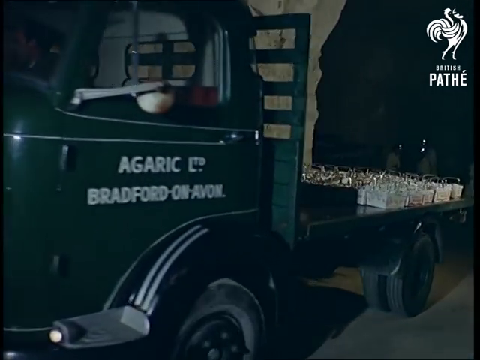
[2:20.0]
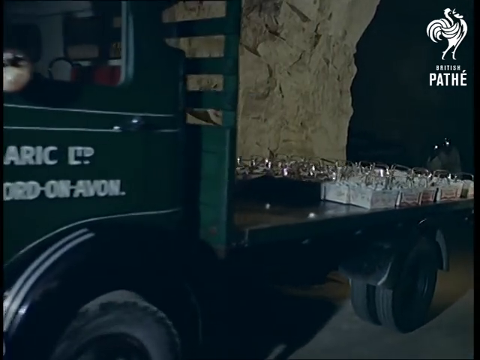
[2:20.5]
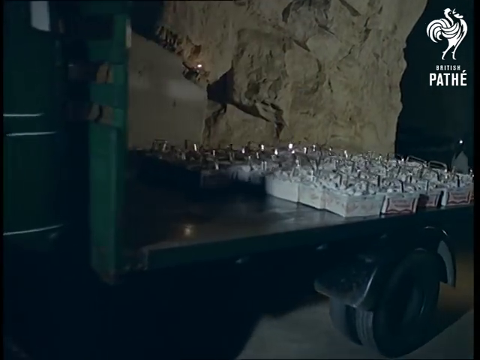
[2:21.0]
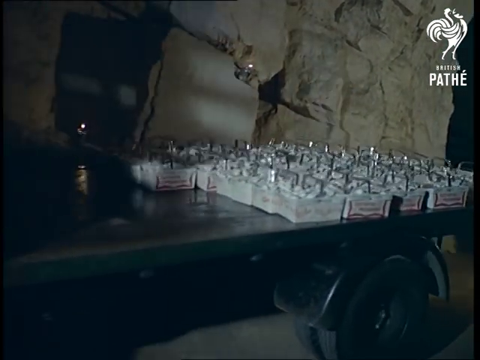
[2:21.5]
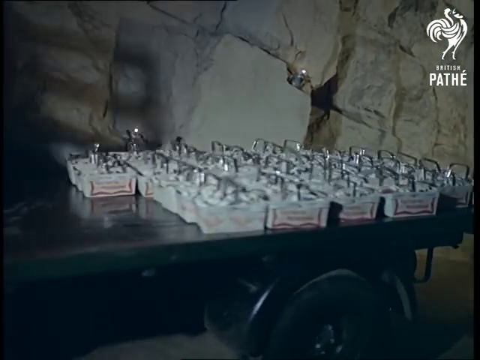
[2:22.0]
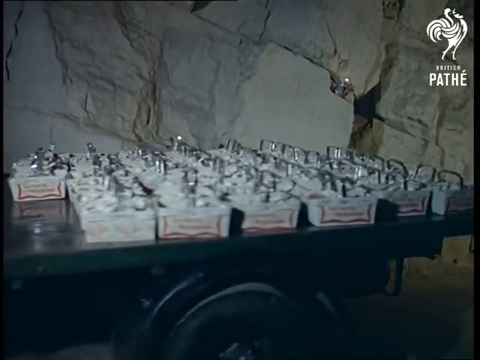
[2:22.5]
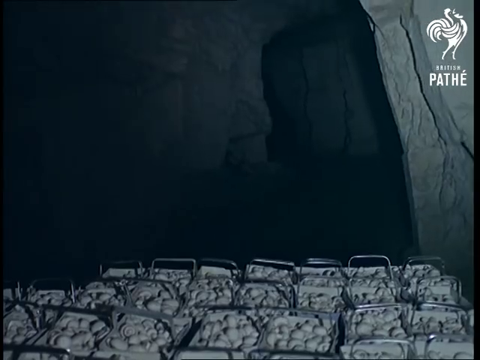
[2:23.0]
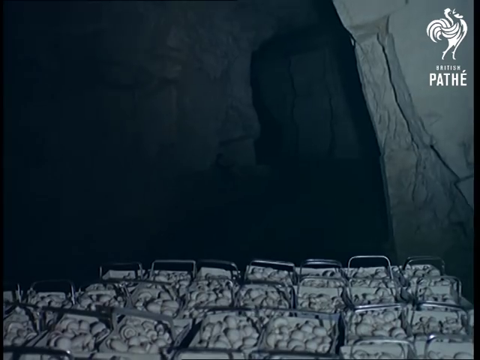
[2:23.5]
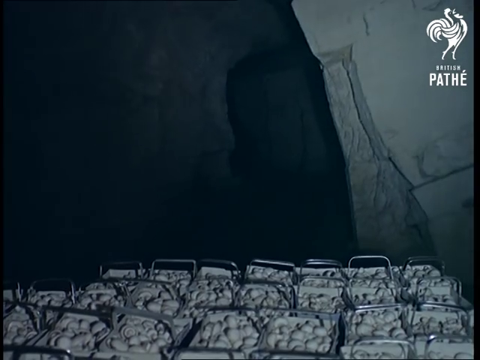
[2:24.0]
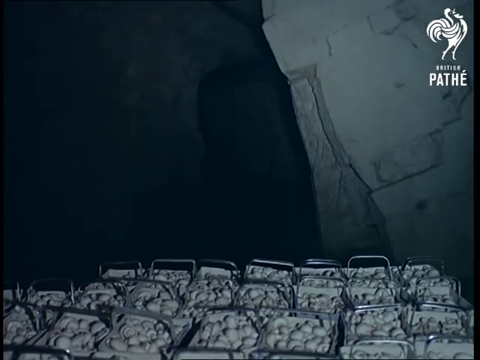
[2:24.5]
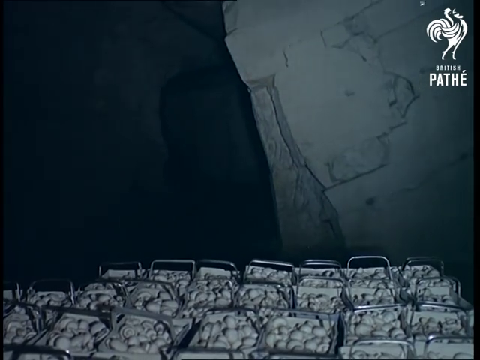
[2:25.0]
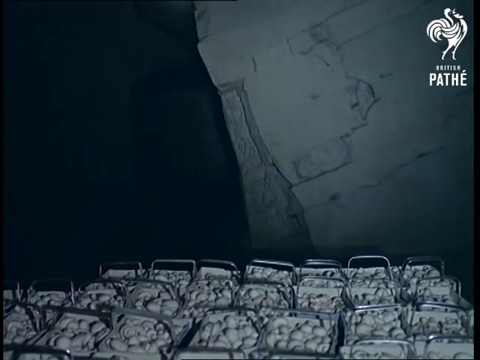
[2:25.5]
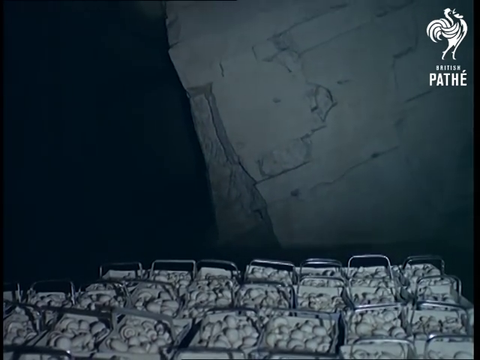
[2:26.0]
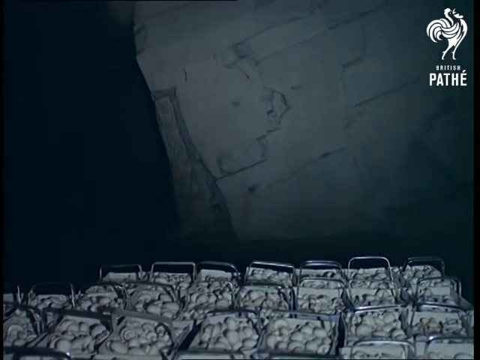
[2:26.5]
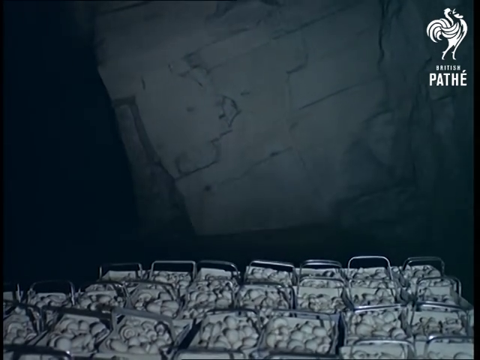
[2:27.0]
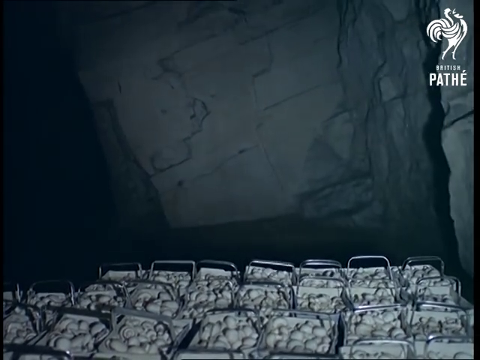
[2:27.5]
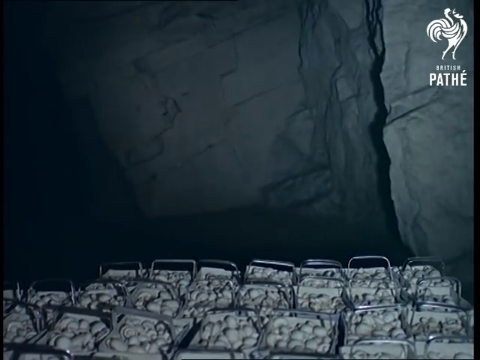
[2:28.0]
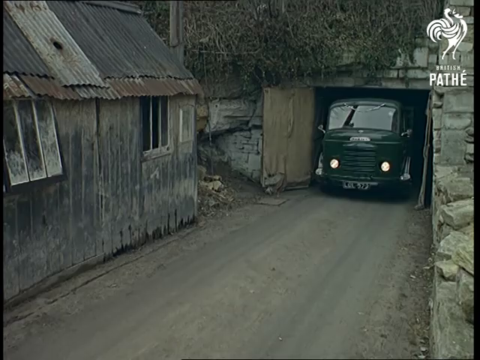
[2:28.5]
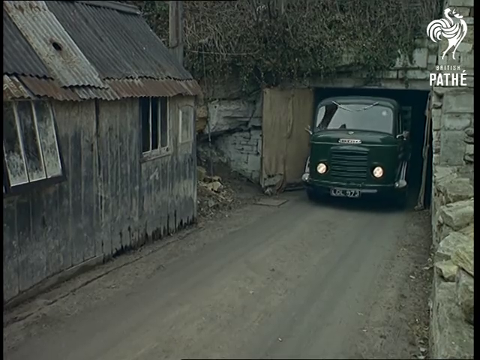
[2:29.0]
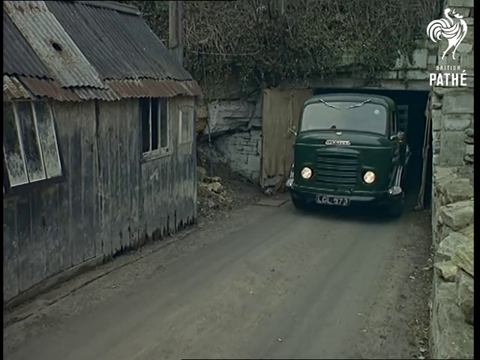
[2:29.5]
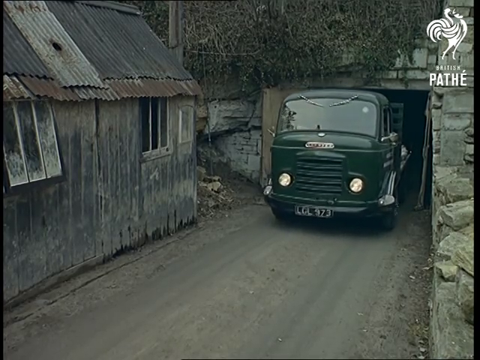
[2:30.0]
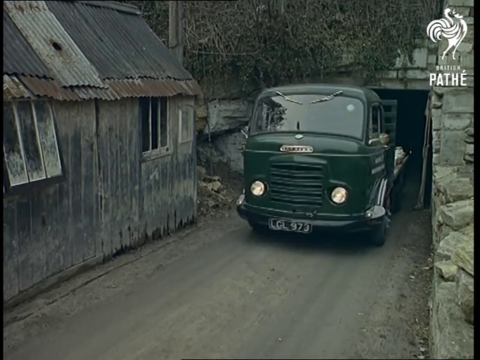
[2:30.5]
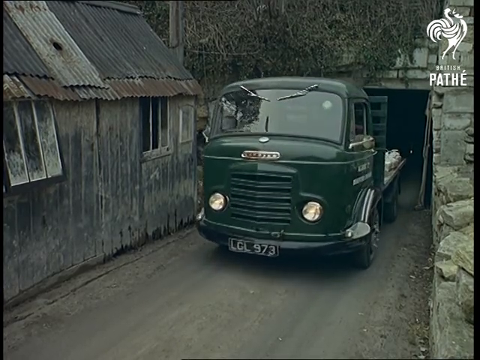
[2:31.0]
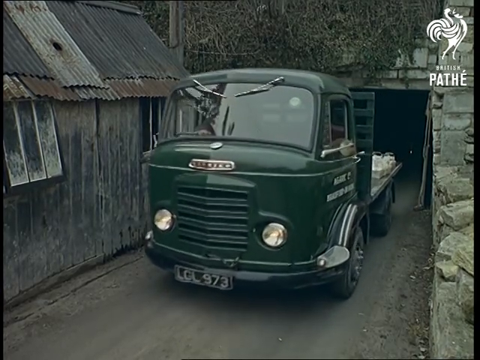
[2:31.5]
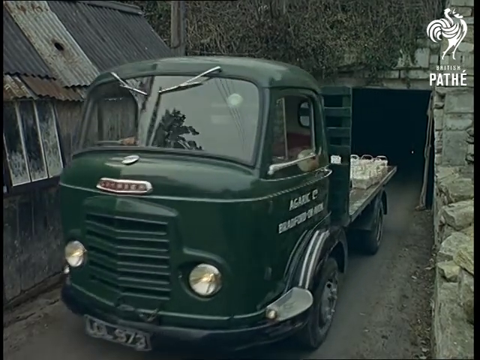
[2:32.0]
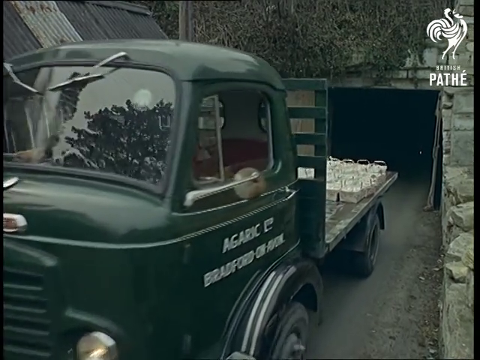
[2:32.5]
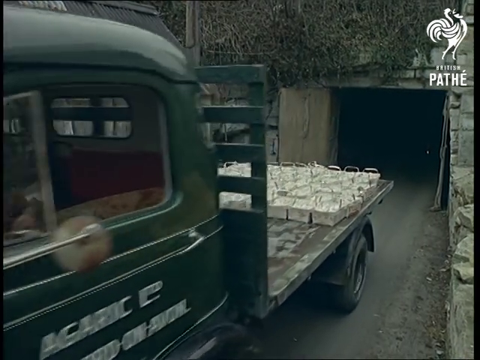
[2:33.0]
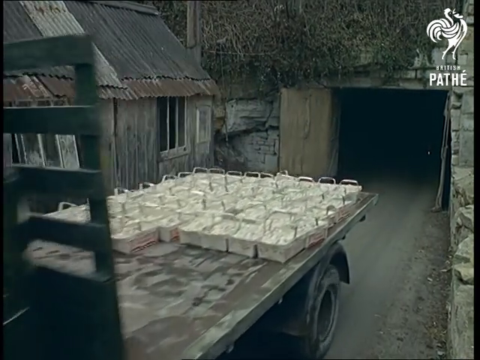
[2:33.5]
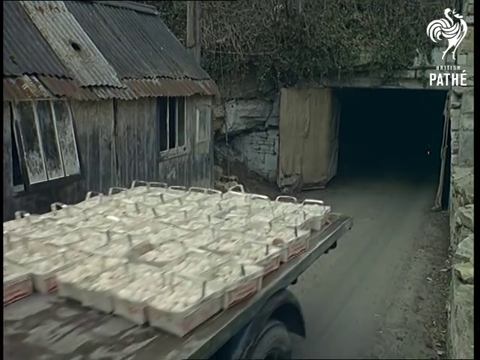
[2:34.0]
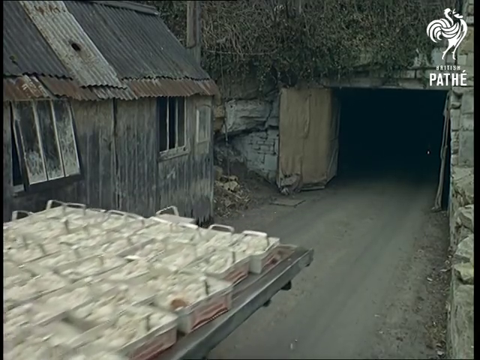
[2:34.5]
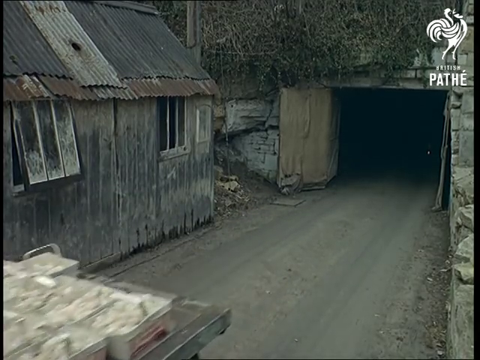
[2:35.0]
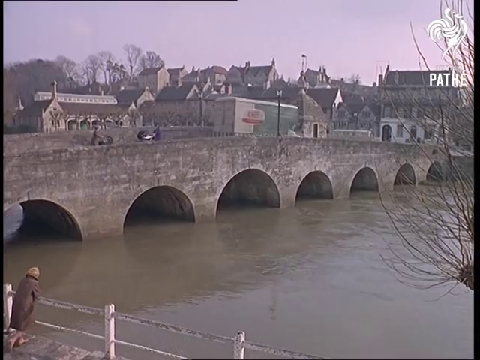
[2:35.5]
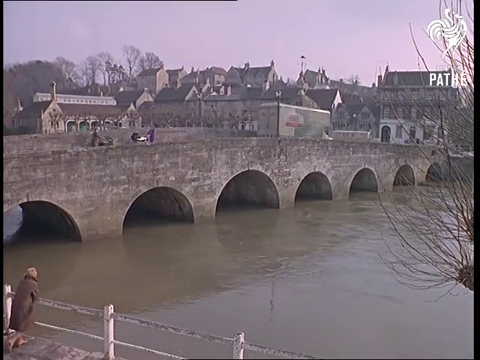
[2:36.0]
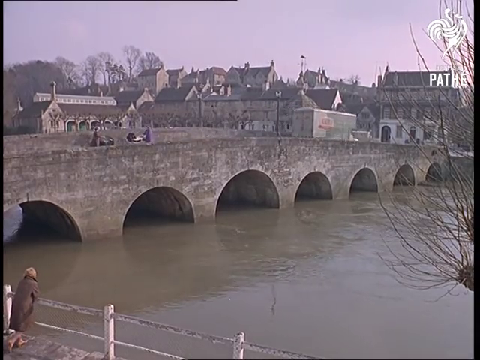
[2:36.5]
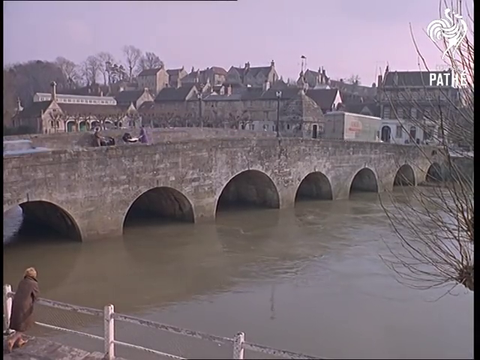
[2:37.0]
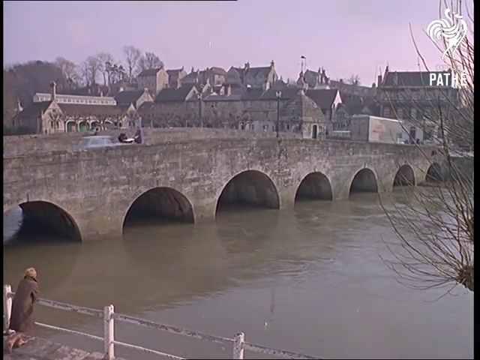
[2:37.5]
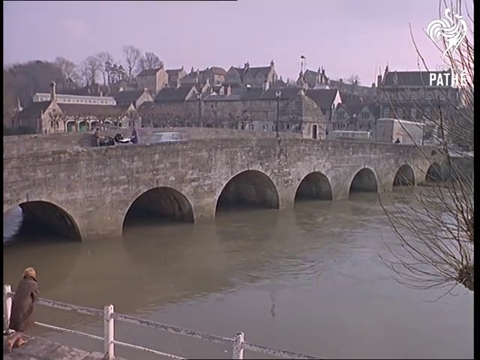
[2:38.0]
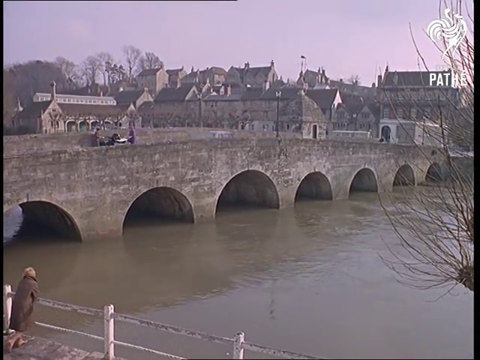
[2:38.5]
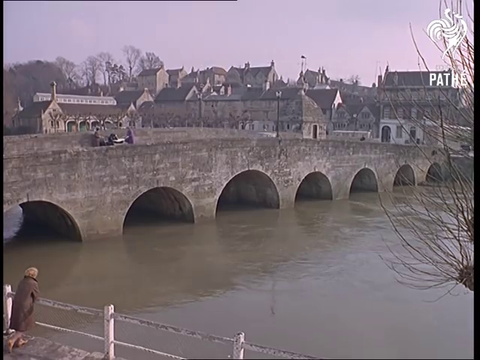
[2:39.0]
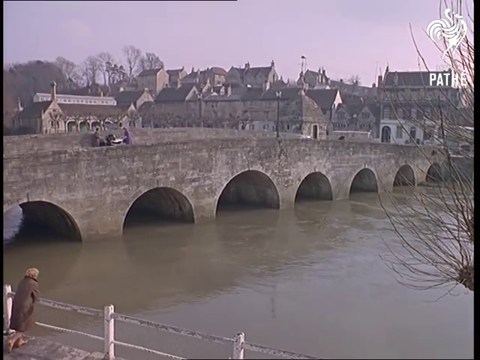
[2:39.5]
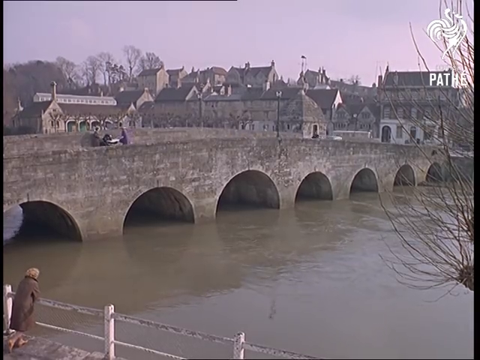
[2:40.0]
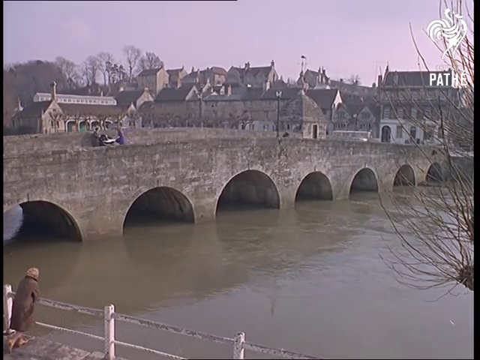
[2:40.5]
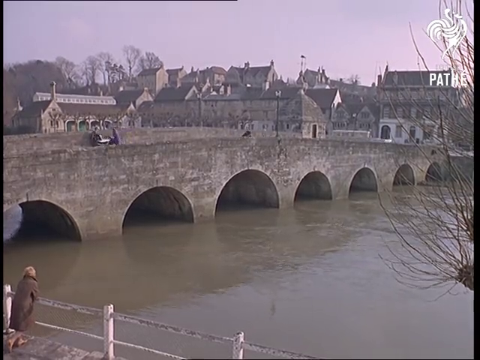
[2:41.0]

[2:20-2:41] The green truck, with a state number identifying it on its side, comes out of the tunnel; it is not dark. It carries several small baskets of white mushrooms and drives into town, crossing a concrete bridge over a river; the bridge has eight openings where boats can pass through. The truck is apparently going to deliver the mushrooms. A woman at a fence looks out over the water, and buildings on a hill are in the background. It looks to be winter, as the woman wears a jacket.